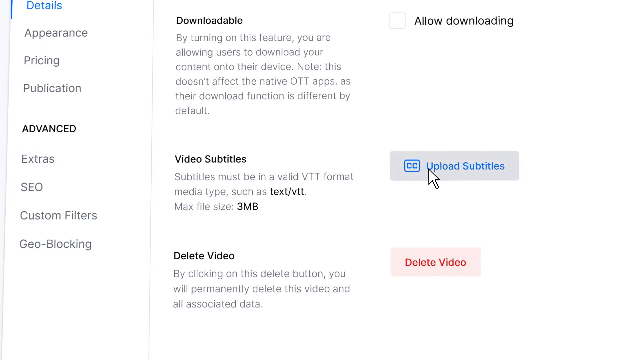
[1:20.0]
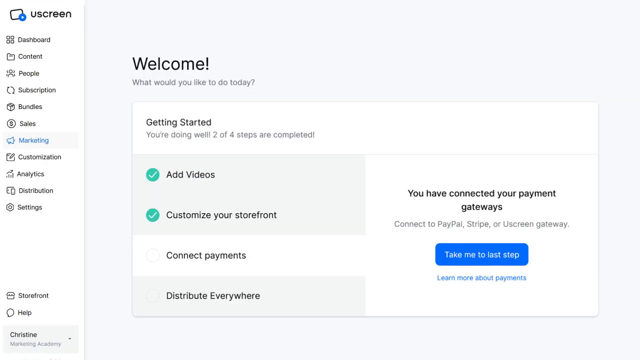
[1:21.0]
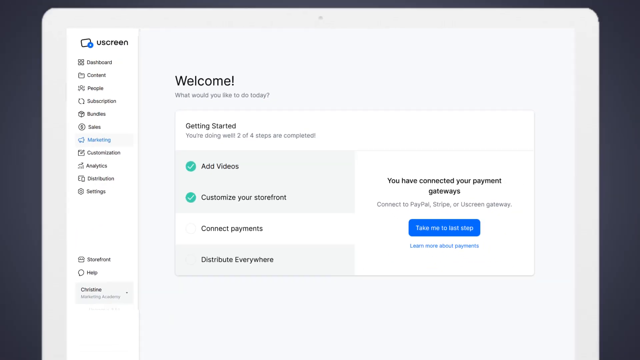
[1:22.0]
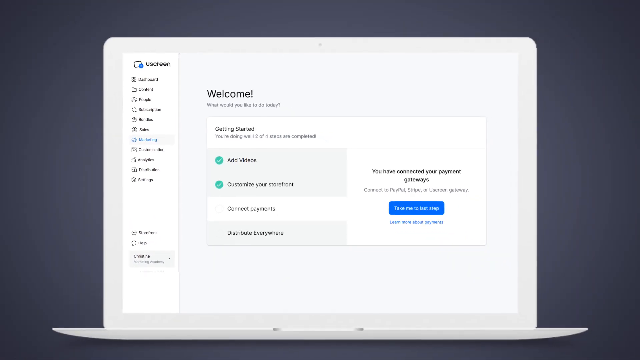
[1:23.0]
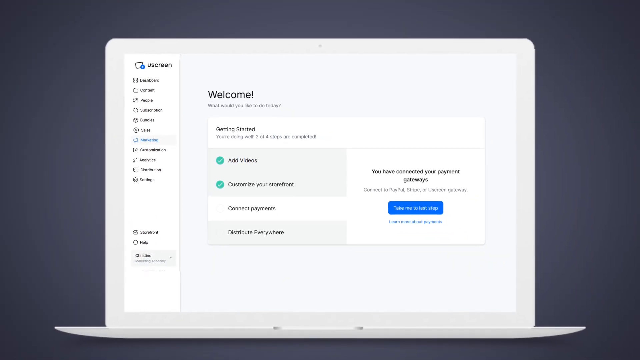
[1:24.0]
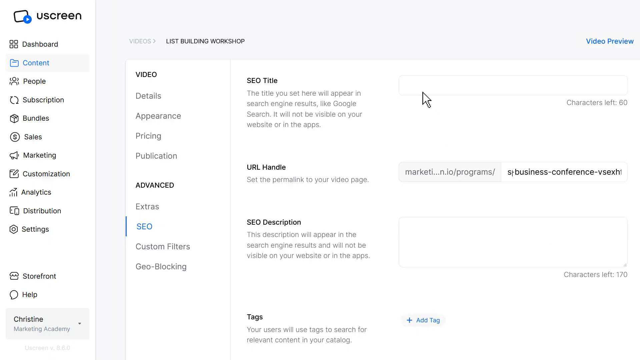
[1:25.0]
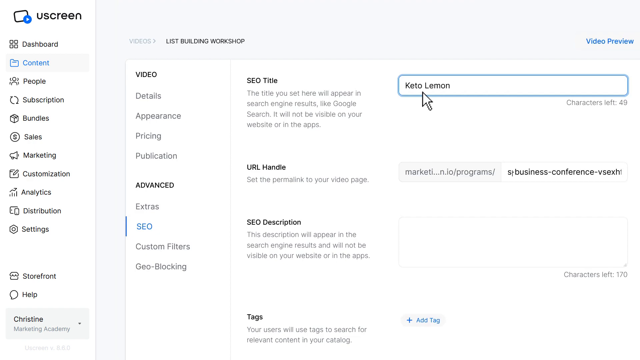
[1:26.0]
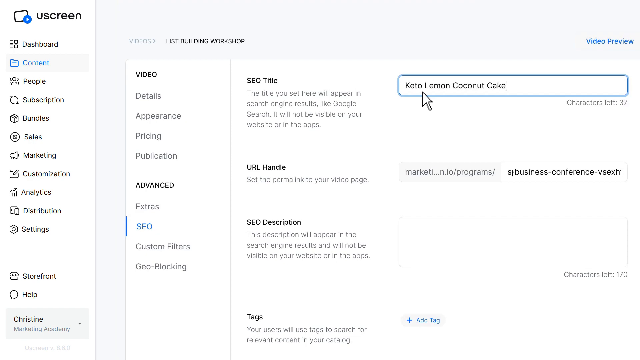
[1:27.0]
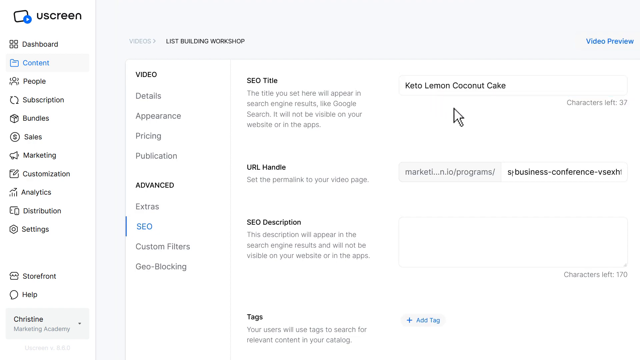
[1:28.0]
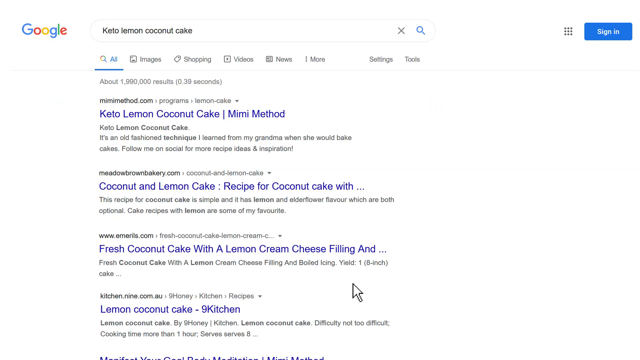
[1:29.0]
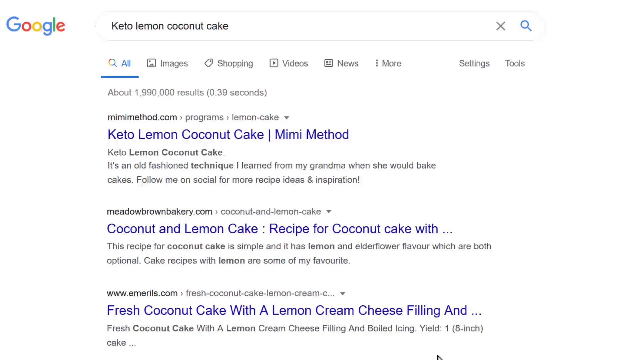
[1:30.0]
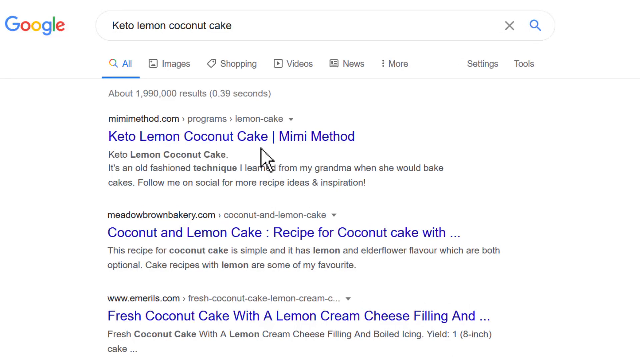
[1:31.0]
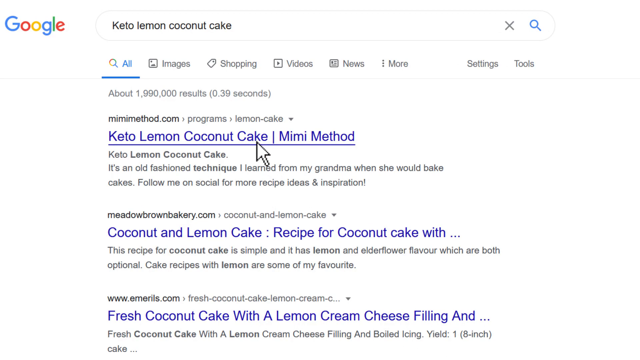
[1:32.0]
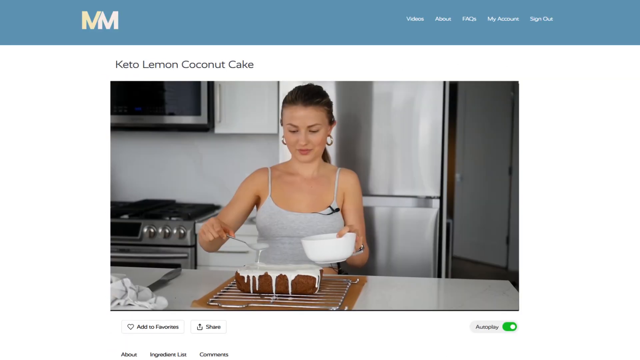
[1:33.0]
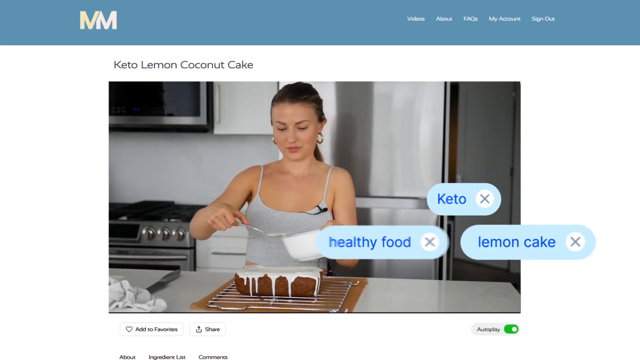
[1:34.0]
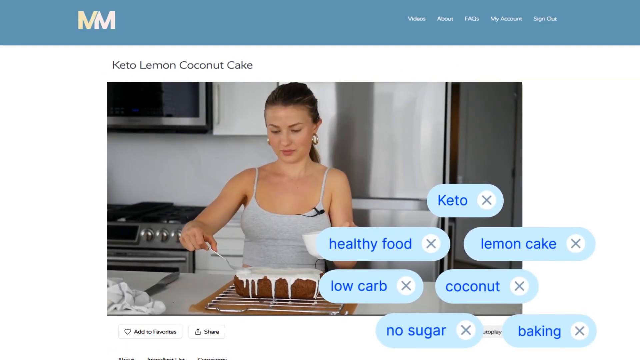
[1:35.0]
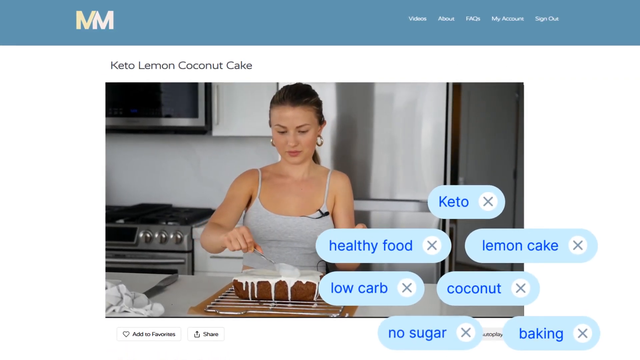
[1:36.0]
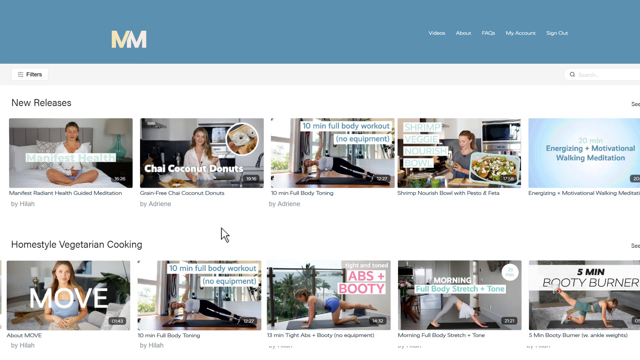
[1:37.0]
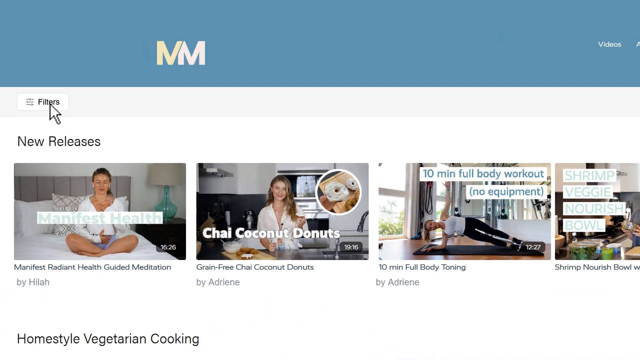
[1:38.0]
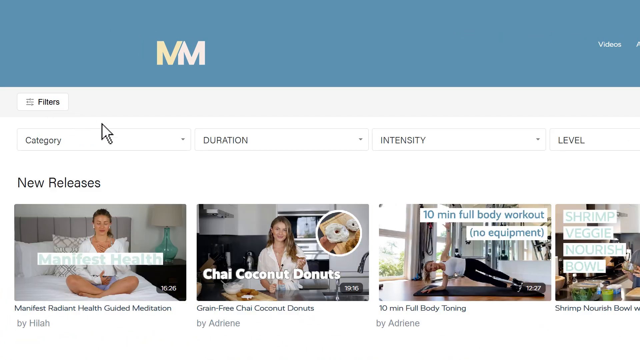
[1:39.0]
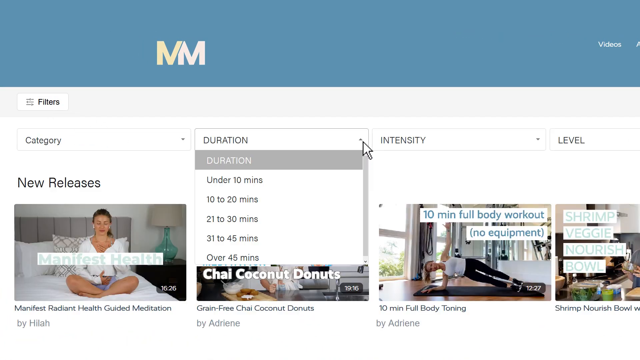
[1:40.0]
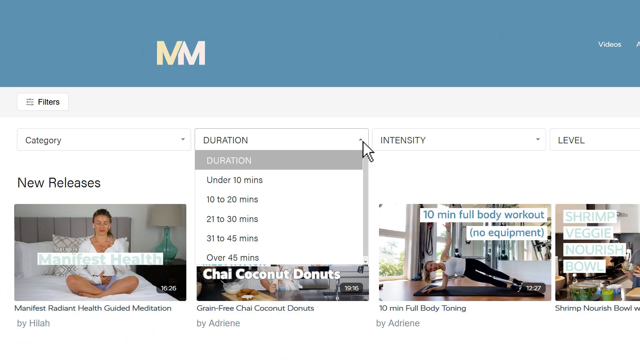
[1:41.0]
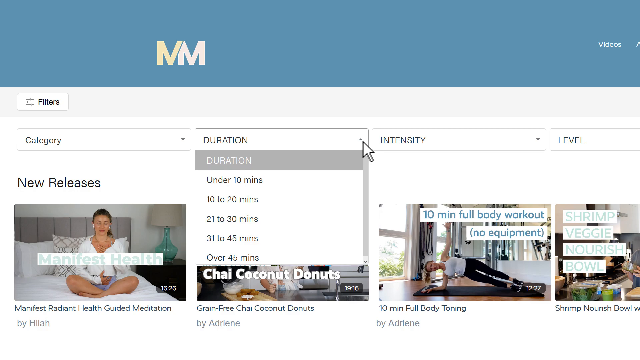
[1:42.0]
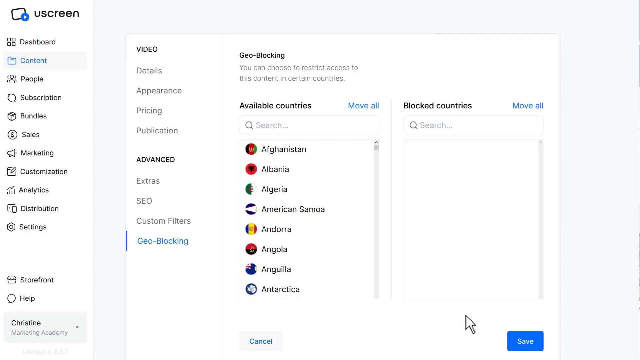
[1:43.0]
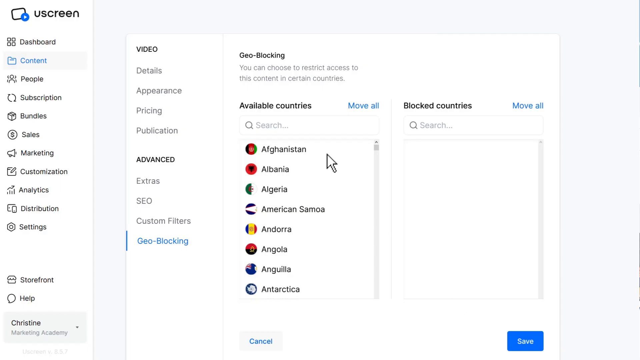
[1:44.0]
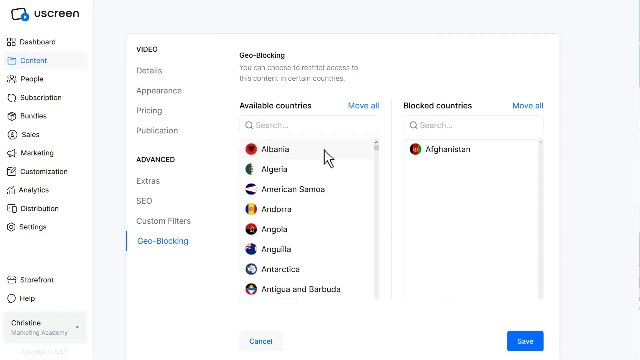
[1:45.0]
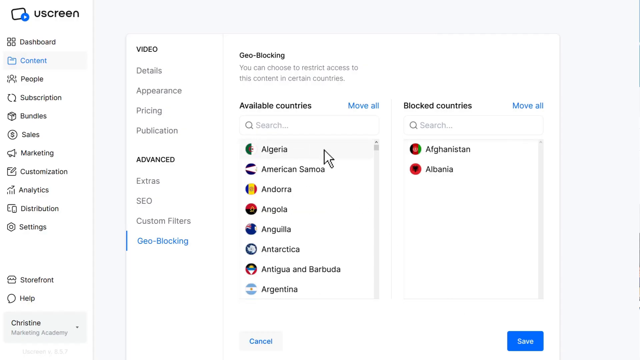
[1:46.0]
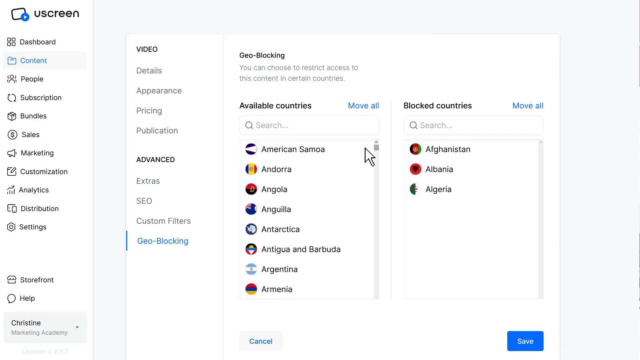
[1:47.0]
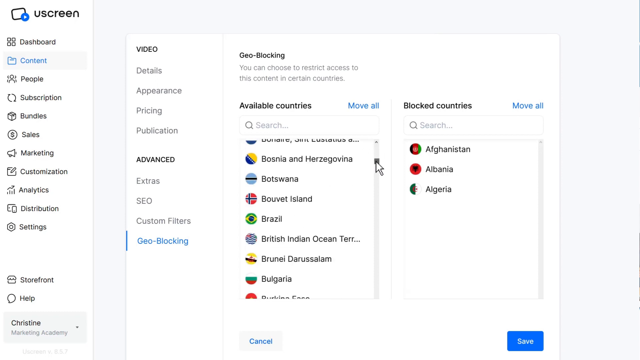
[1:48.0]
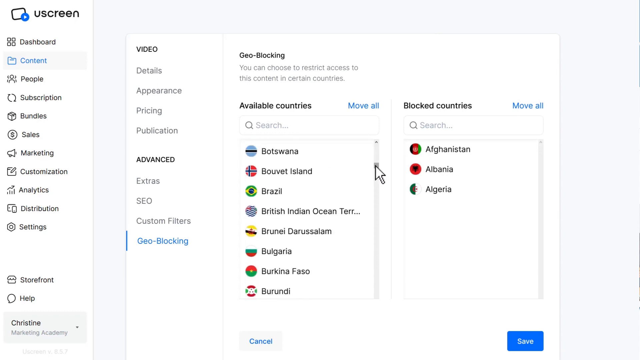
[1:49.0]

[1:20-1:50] The screen says "welcome. You have connected." Someone has typed "keto lemon coconut cake" into the Google search and clicks on it, bringing up a video of a woman making that cake. Results are filtered by duration, and the user clicks on Afghanistan, Albania and Algeria while looking for a state, then clicks the button. There is an option to upload subtitles. The search runs under memethod.com. Tags for keto, healthy food, lemon cake, coconut, low carb and baking appear and can be X'd out, and her videos can be watched.